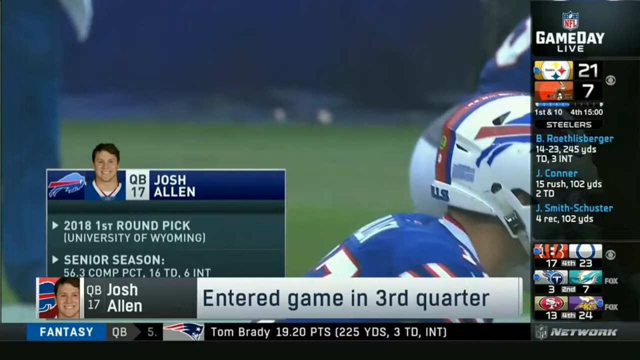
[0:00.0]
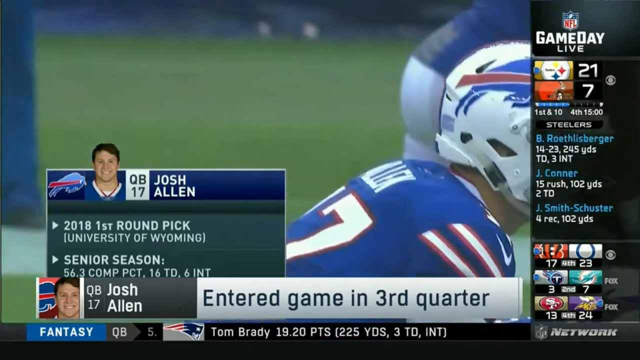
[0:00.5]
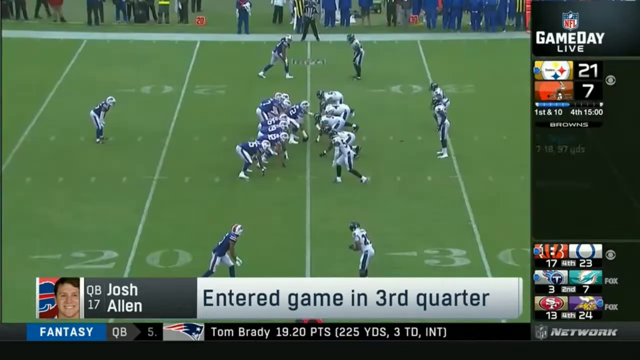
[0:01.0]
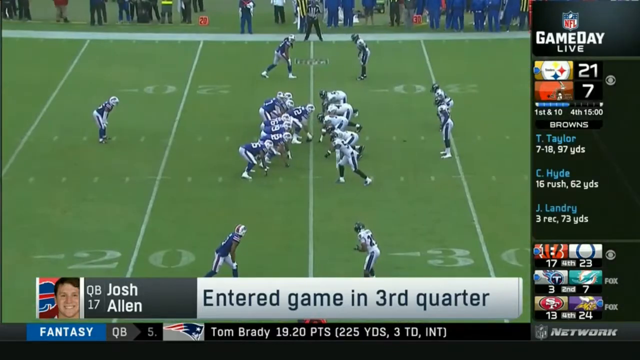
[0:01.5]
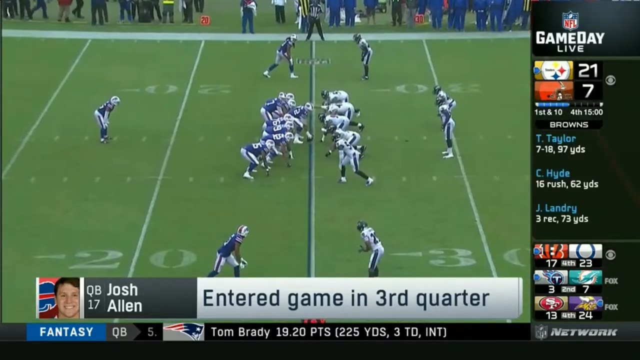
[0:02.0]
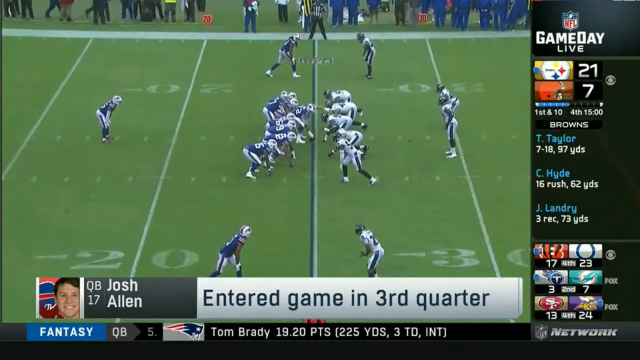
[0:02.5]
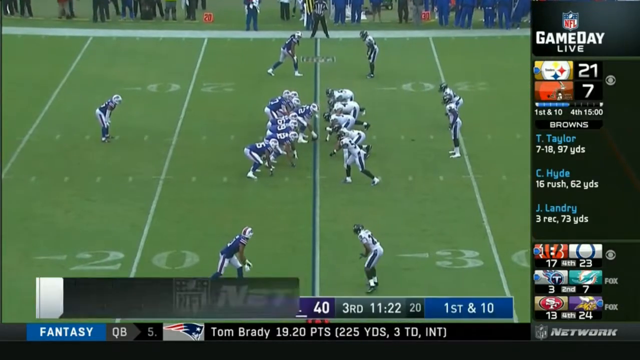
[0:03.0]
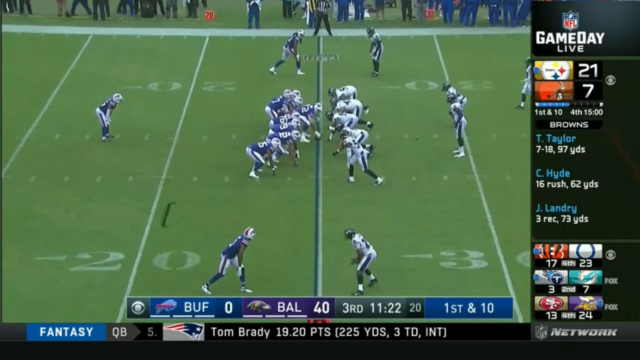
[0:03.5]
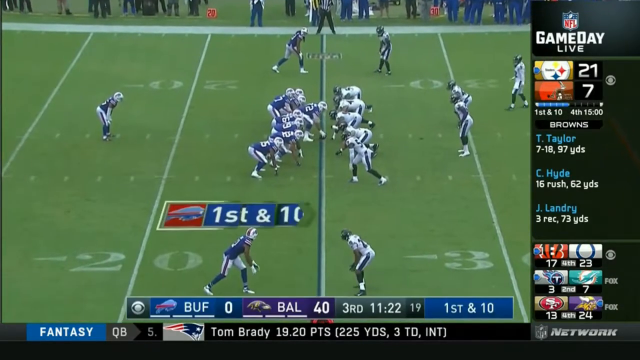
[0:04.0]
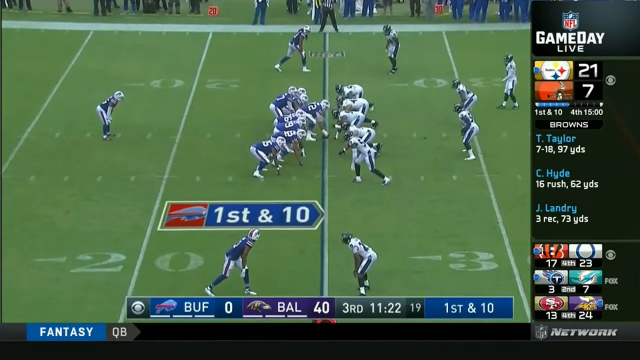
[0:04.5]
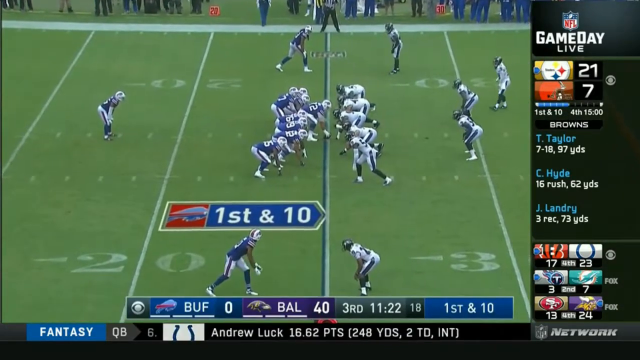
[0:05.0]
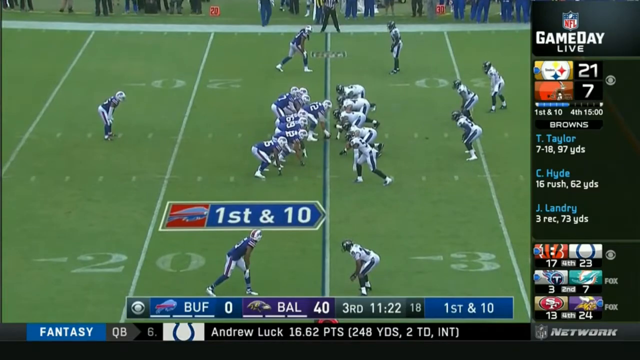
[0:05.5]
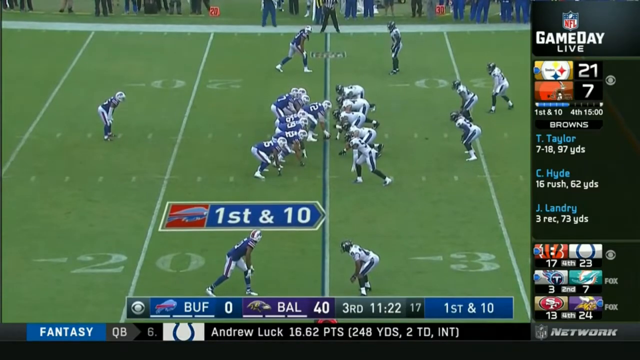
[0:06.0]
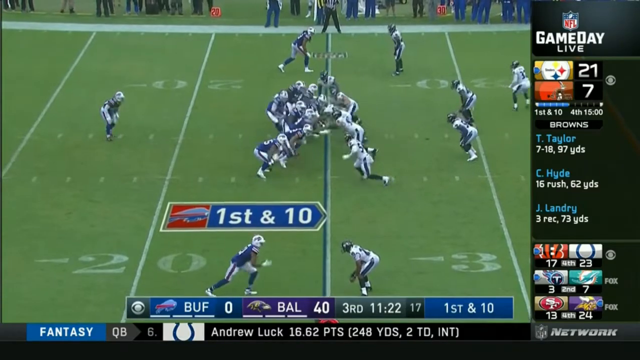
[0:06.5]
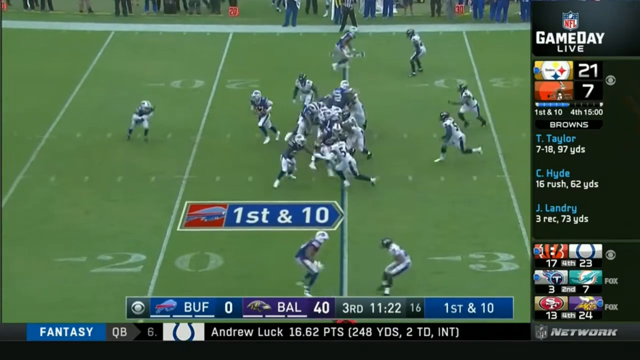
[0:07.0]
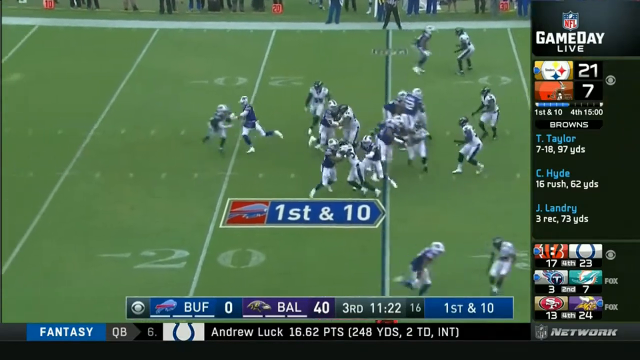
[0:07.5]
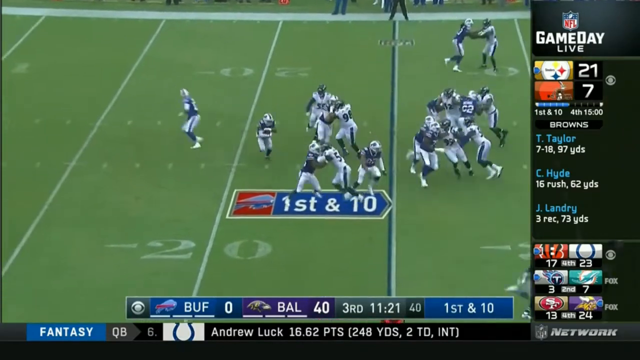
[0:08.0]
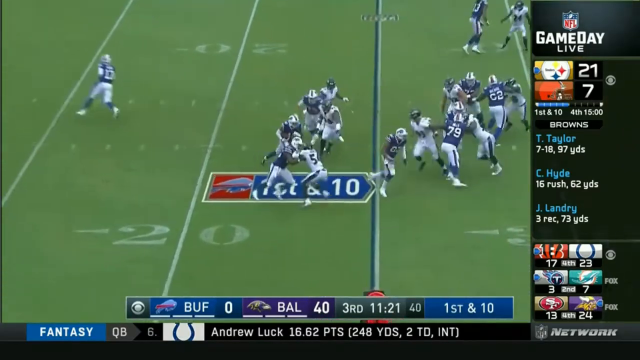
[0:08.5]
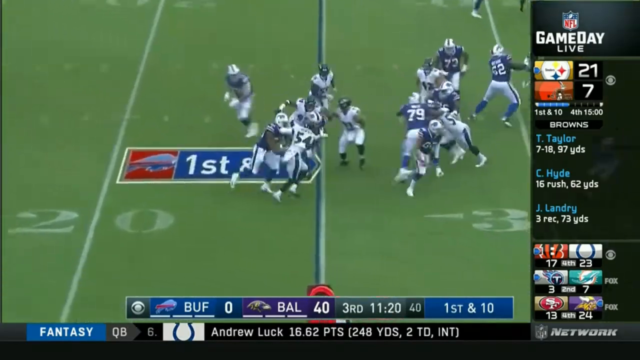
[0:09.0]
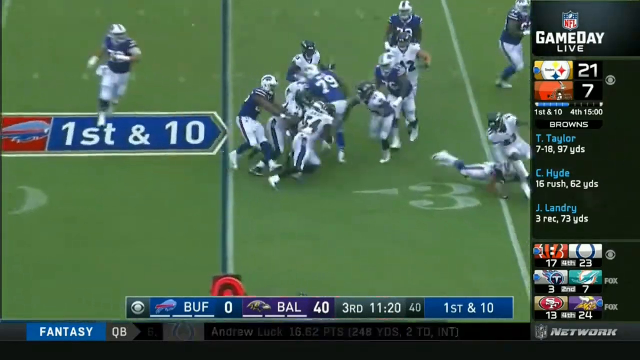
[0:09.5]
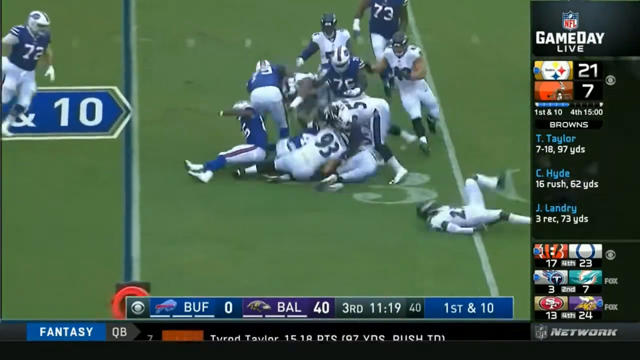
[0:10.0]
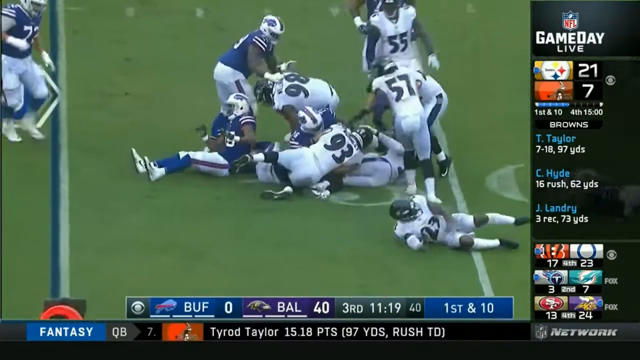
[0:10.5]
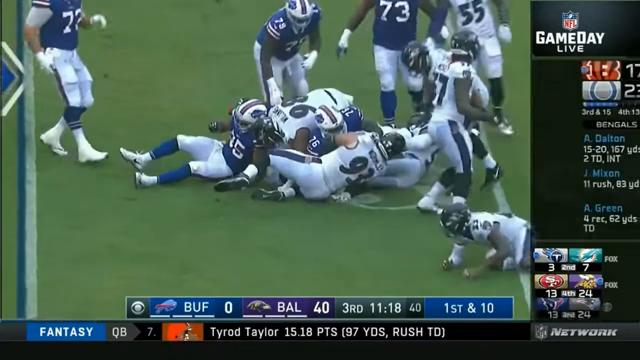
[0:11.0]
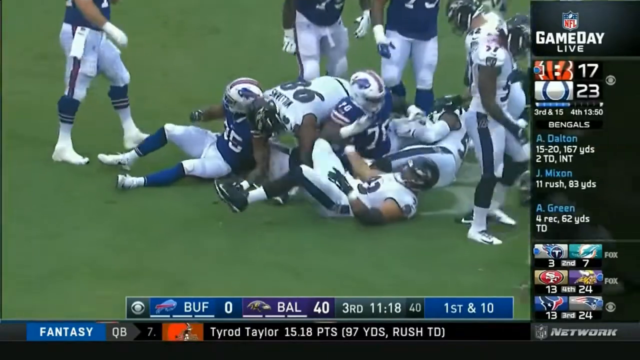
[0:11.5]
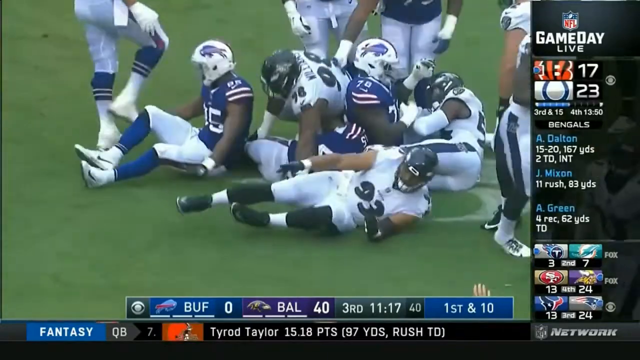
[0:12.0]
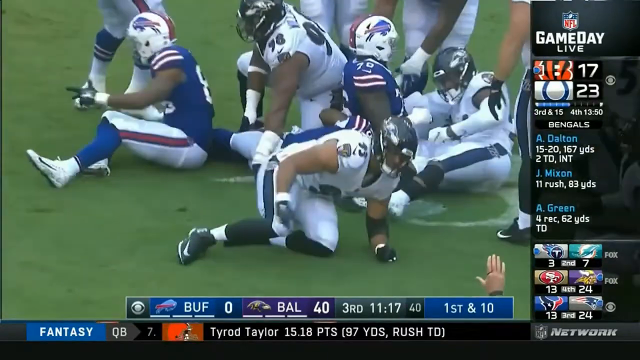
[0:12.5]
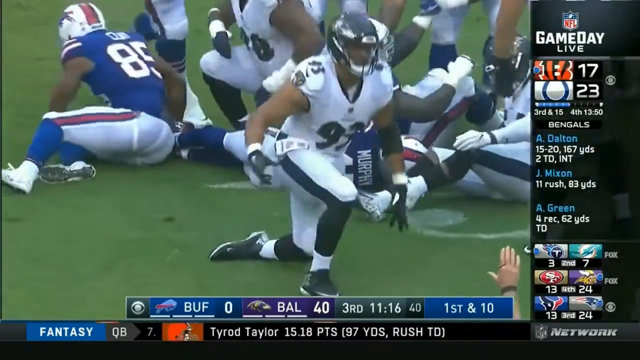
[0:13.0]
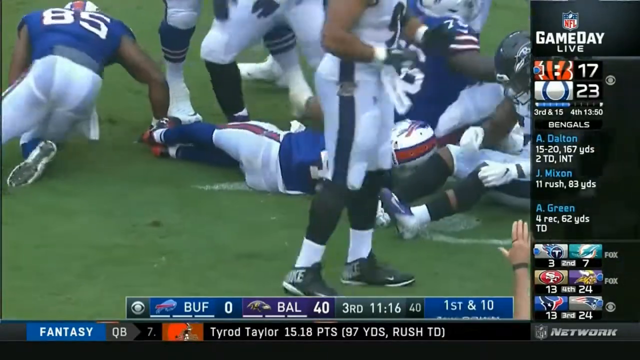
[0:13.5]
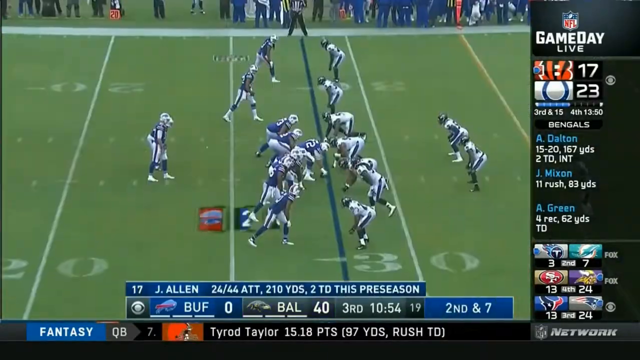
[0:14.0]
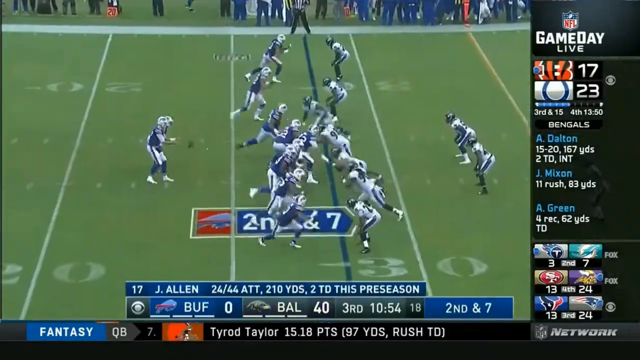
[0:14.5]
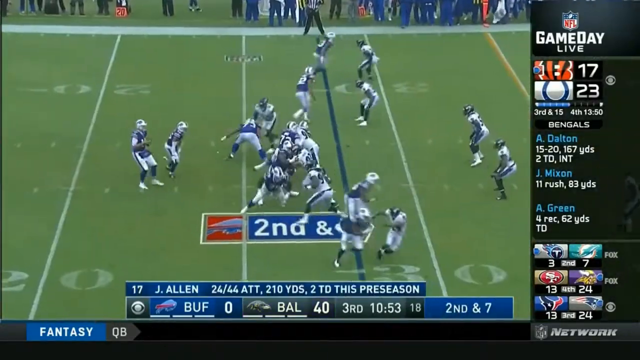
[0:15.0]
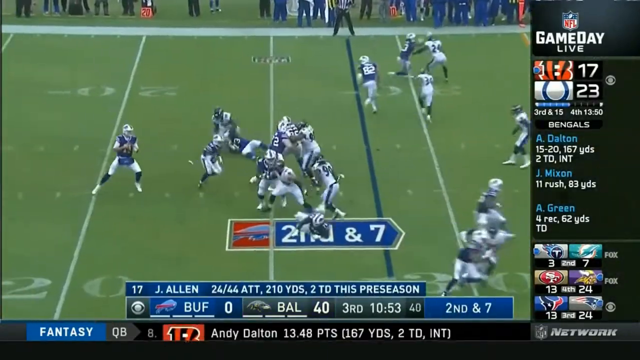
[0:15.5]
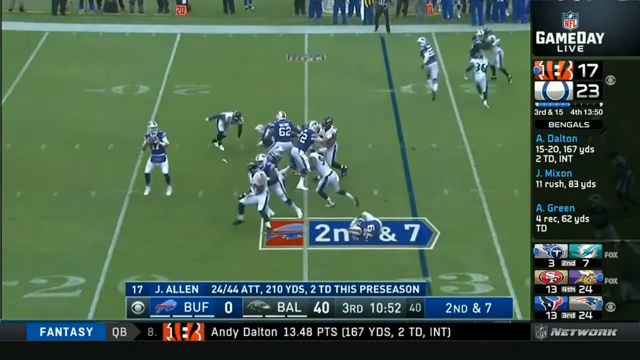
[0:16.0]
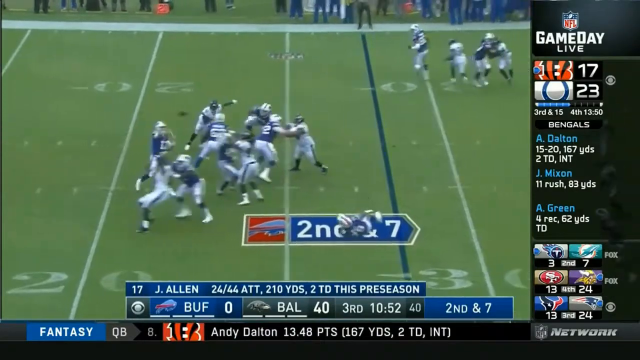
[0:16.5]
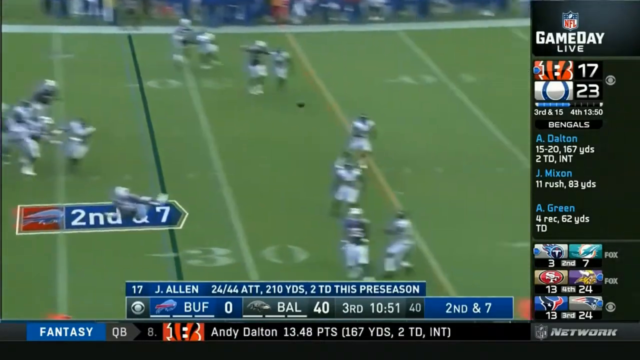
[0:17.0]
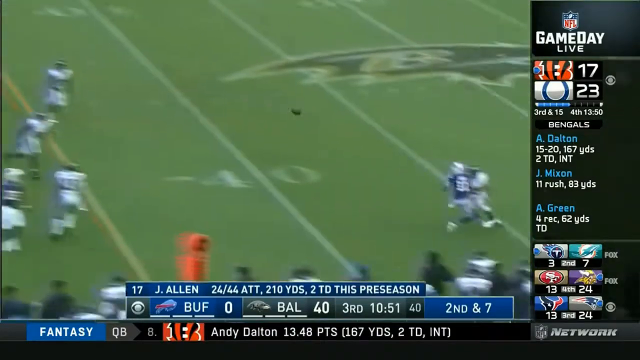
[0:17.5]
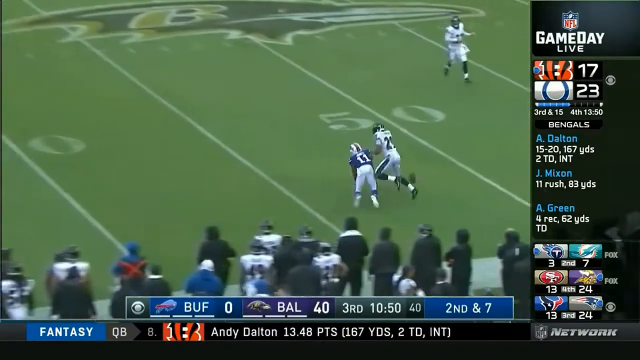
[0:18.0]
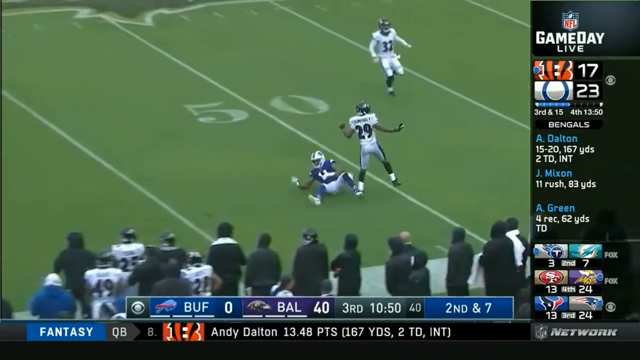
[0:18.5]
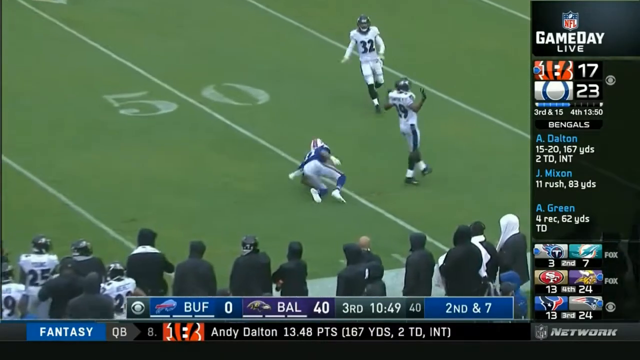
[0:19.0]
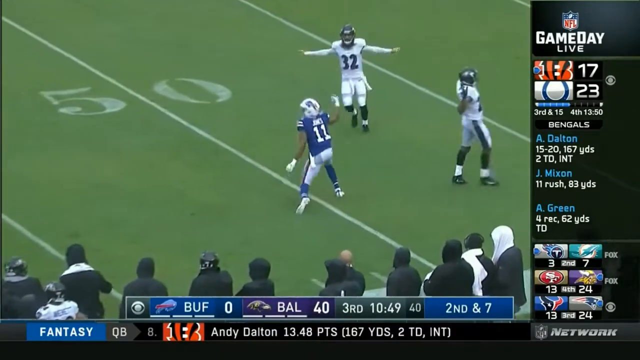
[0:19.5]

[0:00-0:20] A football game is on screen with a number of stats along the sides and in the center left. On the right, a panel reads "game day live" and shows 21 to 7 for the Steelers game, along with players including Rothenberger, Jay Connor and Jay Smith, followed by scores for other games: 17 to 23, 3 to 7 and 13 to 24. On the left of the main screen, text reads "quarterback 17 Josh Allen," noting he was the 2018 first-round pick from the University of Wyoming and that his senior season saw a 56.3 completion percentage, 16 touchdowns and 6 interceptions; it seems he entered the game in the third quarter. Along the bottom, "fantasy QB 5" appears with the New England Patriots logo, showing Tom Brady with 20 points, 225 yards, 3 touchdowns and an interception. The two teams line up, Buffalo on the left and Baltimore on the right. Buffalo is at first and 10, with Buffalo at zero points and Baltimore at 40, in the third quarter with 11 minutes and 22 seconds left. The bottom then shows number six, Andrew Luck, with 16.62 points, 248 yards, two touchdowns and no interceptions. The teams start the play and Allen rushes into the crowd as they sort of try to charge through. In another play, the quarterback tries to throw the ball, but the pass is incomplete.